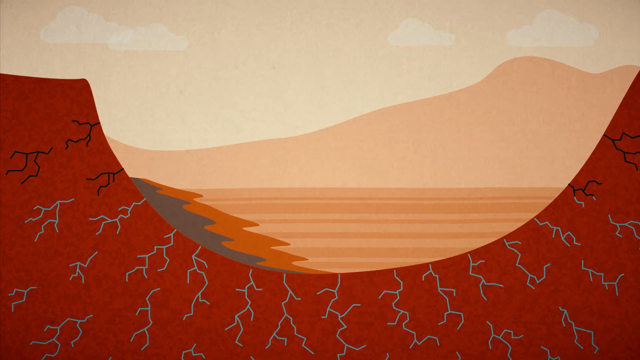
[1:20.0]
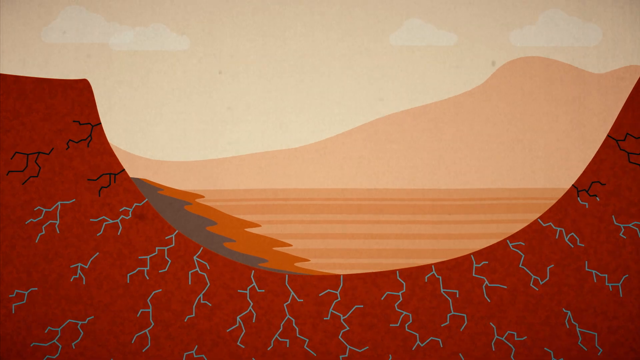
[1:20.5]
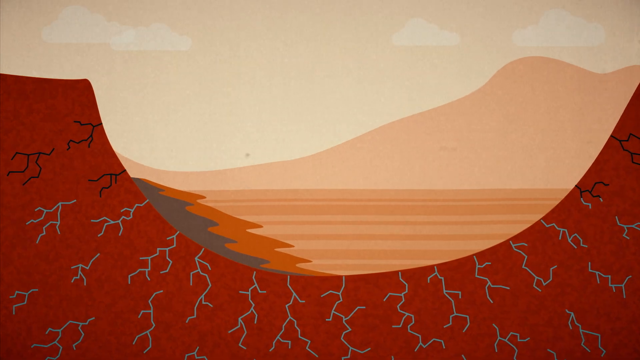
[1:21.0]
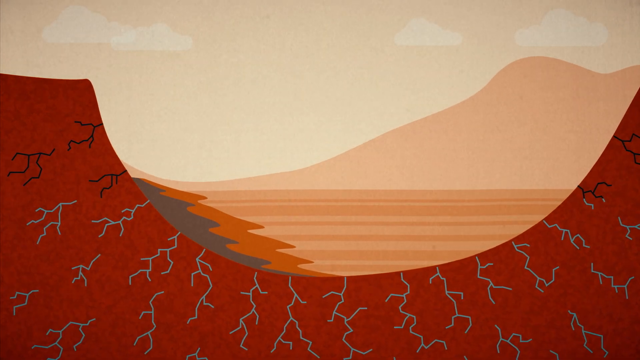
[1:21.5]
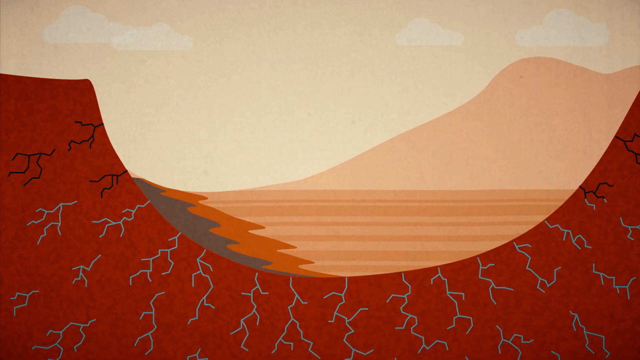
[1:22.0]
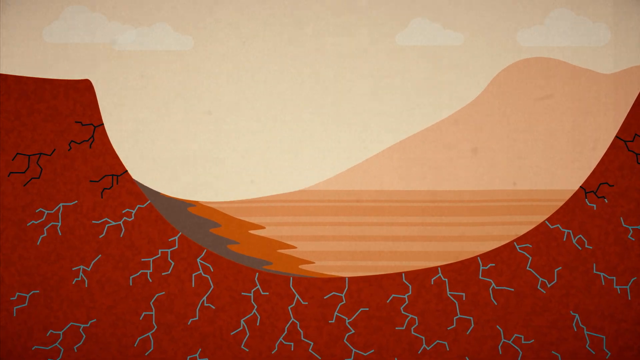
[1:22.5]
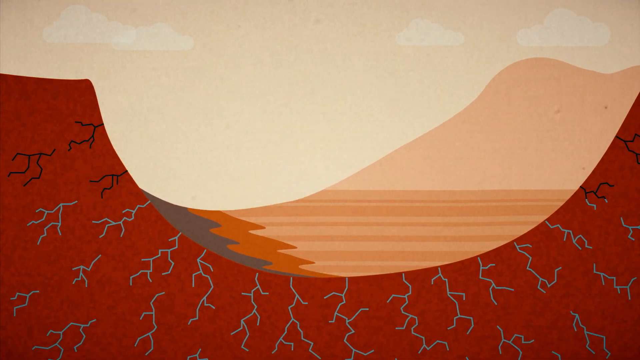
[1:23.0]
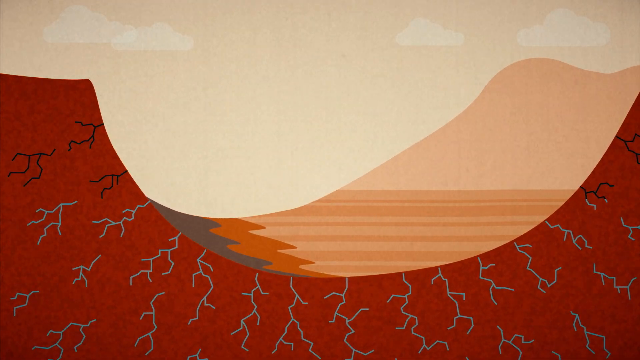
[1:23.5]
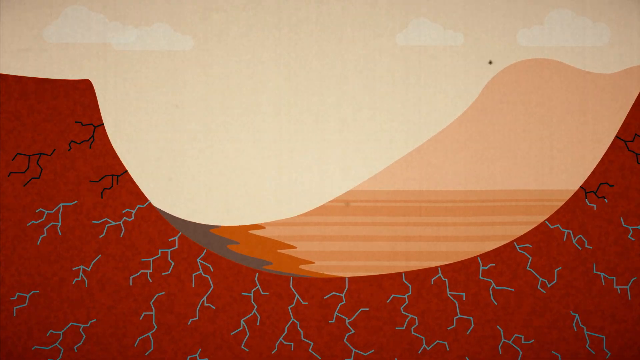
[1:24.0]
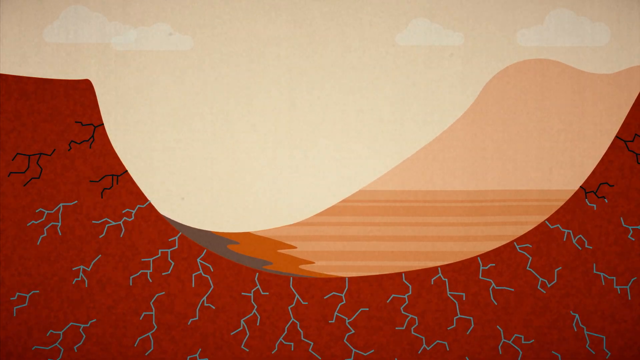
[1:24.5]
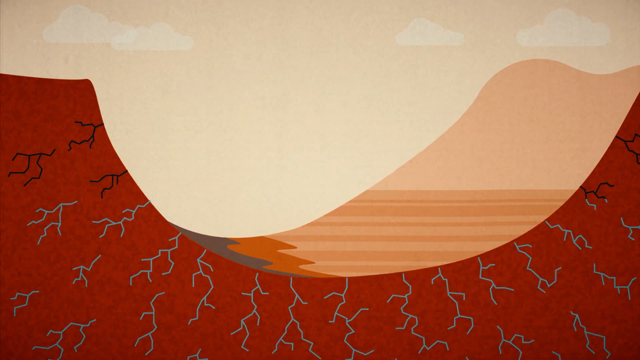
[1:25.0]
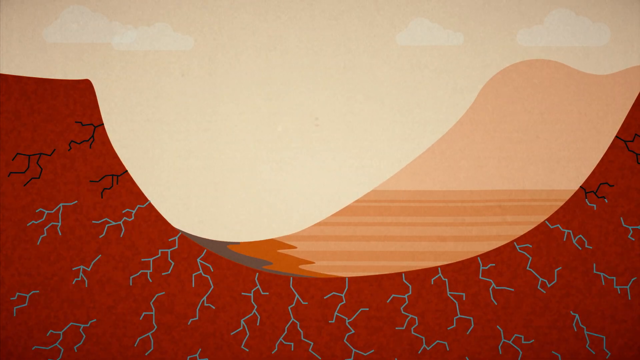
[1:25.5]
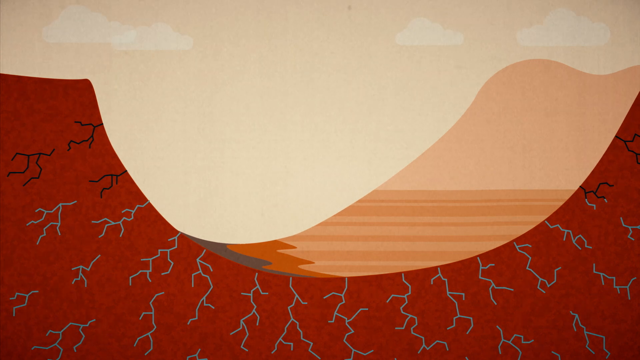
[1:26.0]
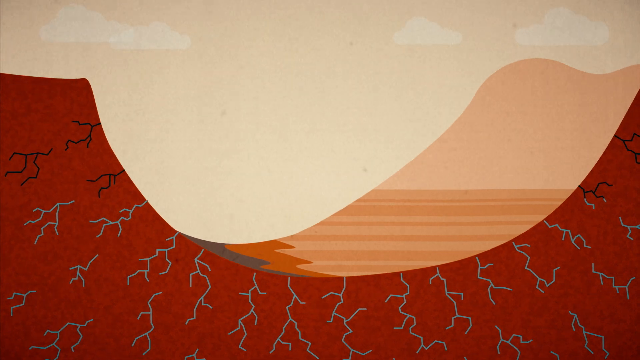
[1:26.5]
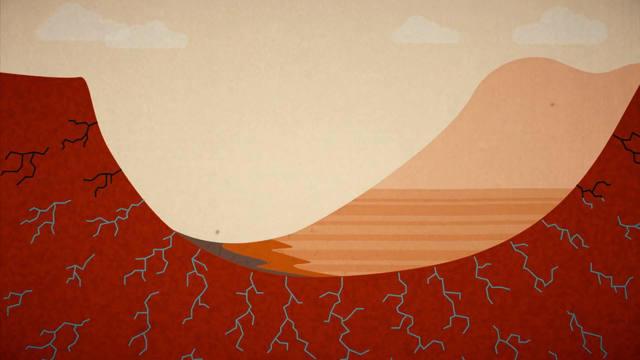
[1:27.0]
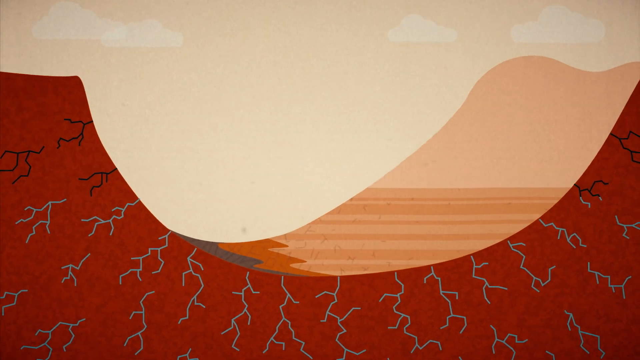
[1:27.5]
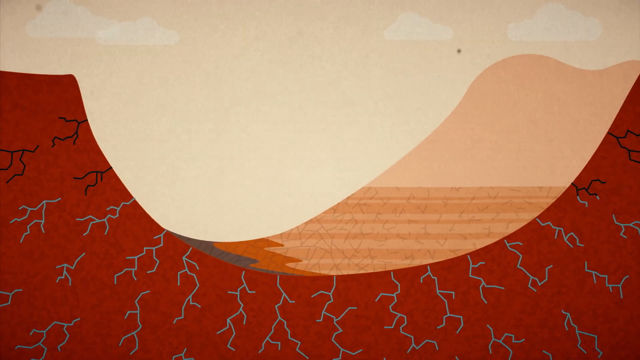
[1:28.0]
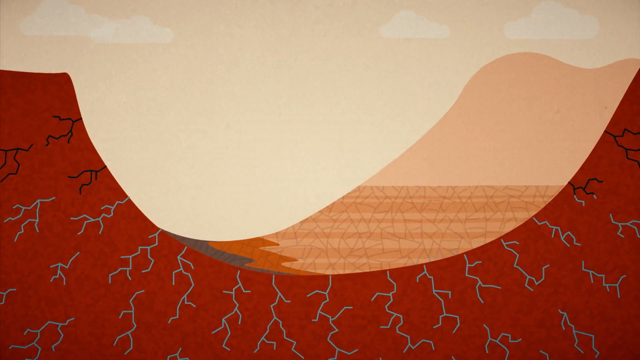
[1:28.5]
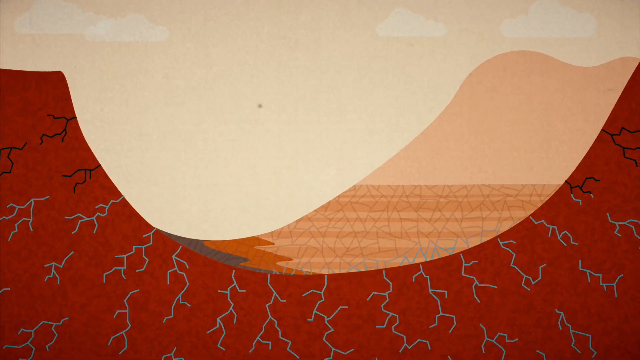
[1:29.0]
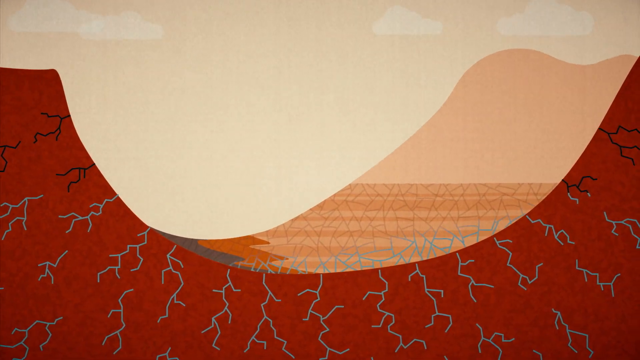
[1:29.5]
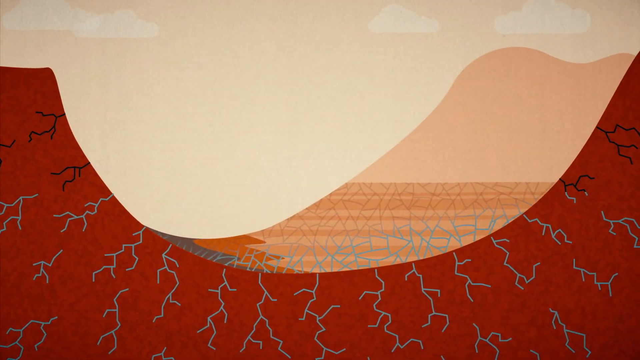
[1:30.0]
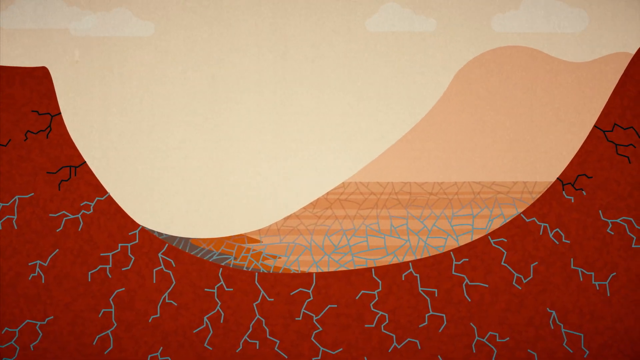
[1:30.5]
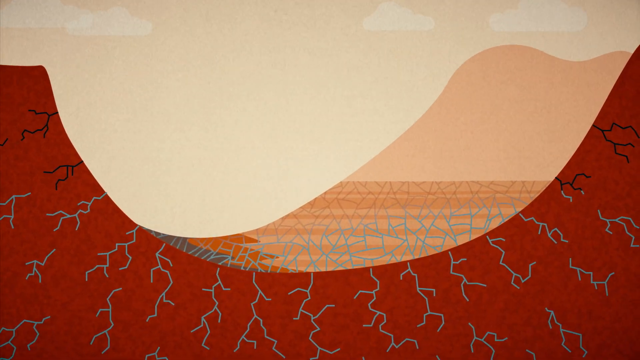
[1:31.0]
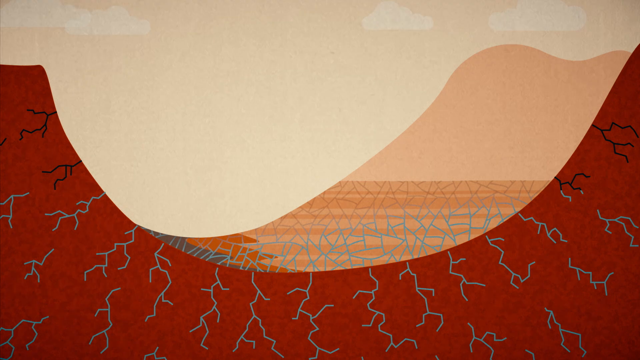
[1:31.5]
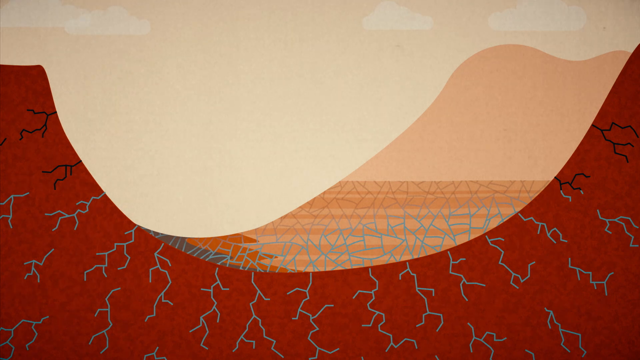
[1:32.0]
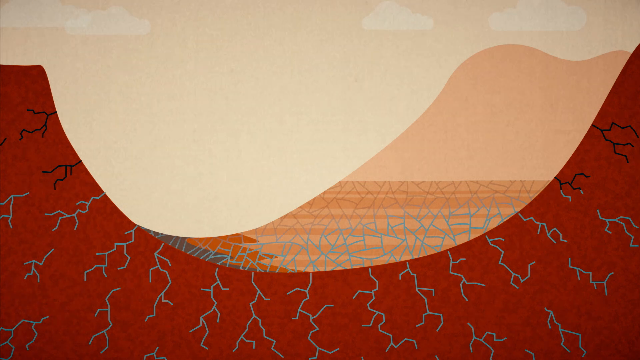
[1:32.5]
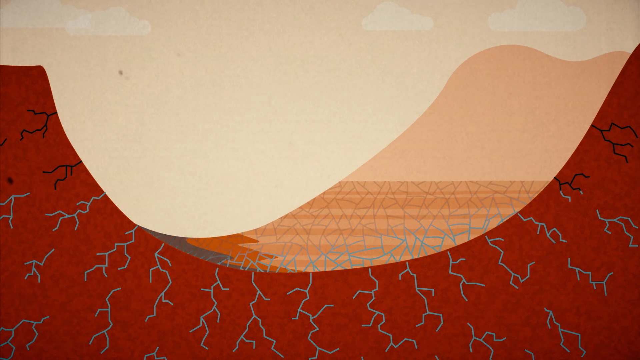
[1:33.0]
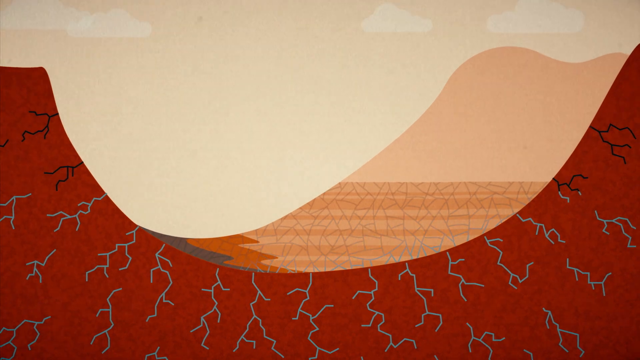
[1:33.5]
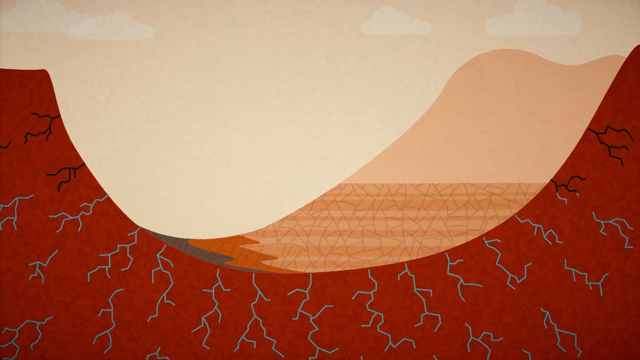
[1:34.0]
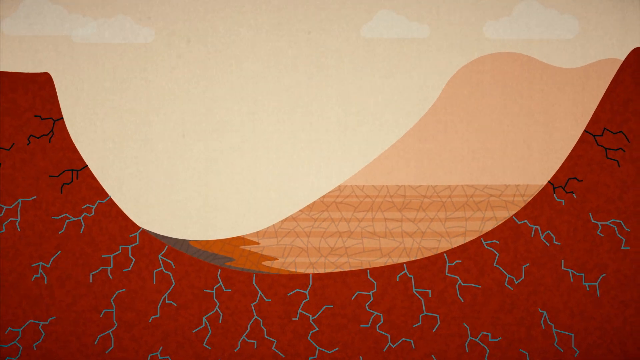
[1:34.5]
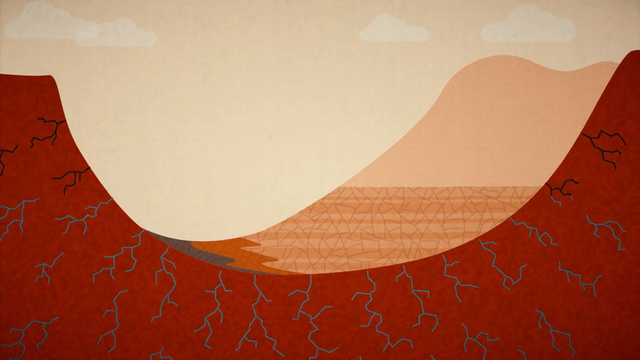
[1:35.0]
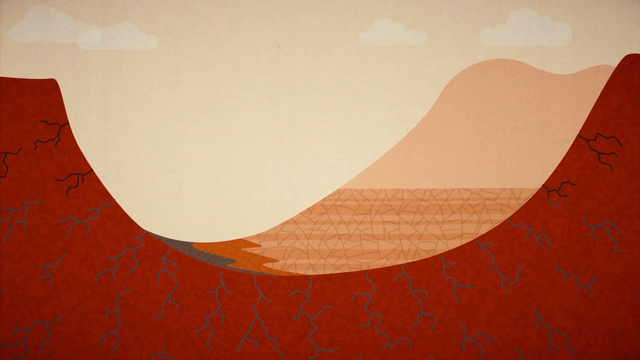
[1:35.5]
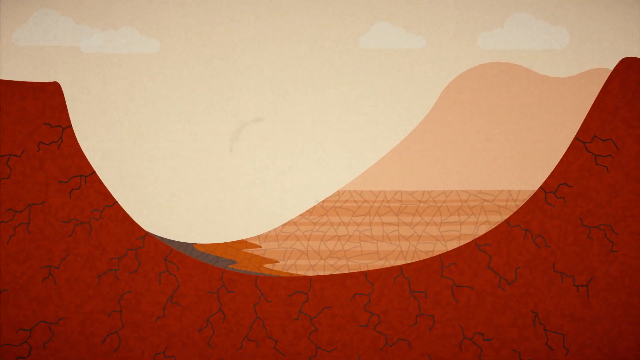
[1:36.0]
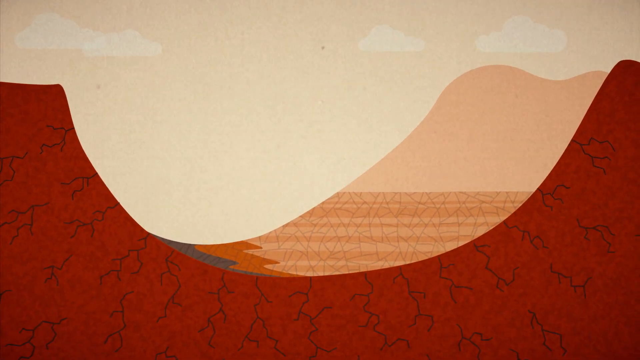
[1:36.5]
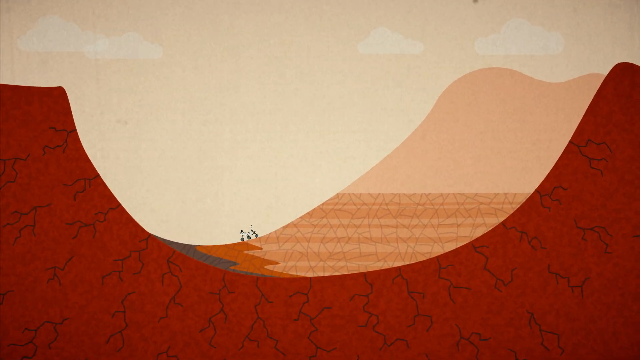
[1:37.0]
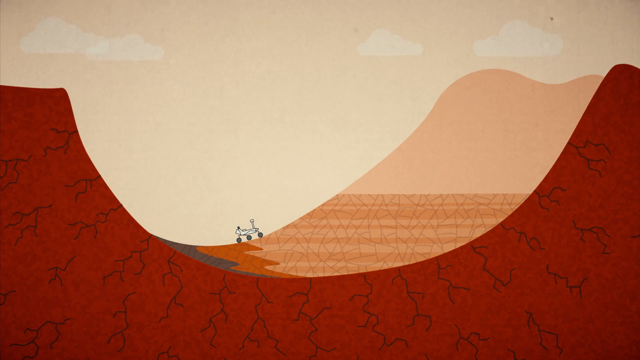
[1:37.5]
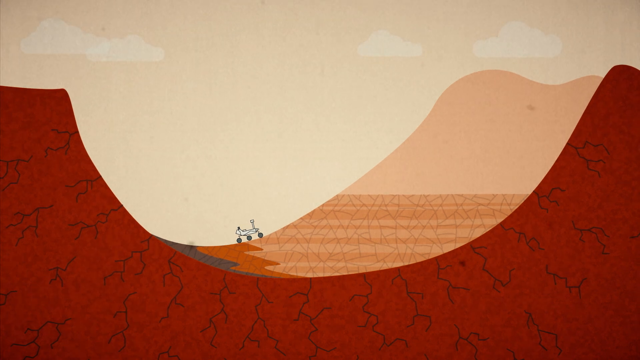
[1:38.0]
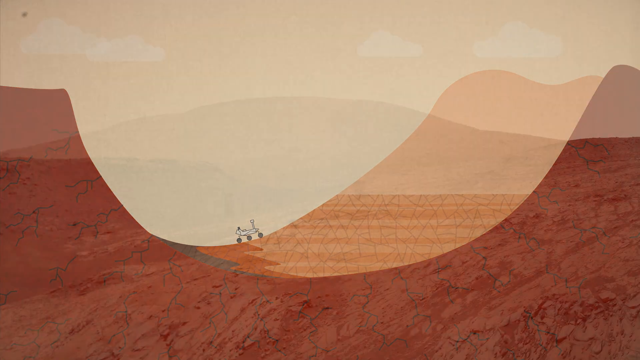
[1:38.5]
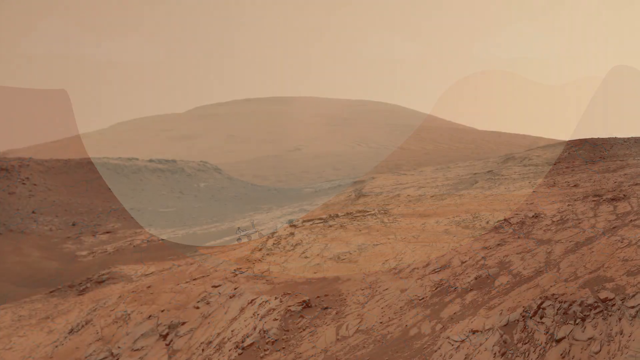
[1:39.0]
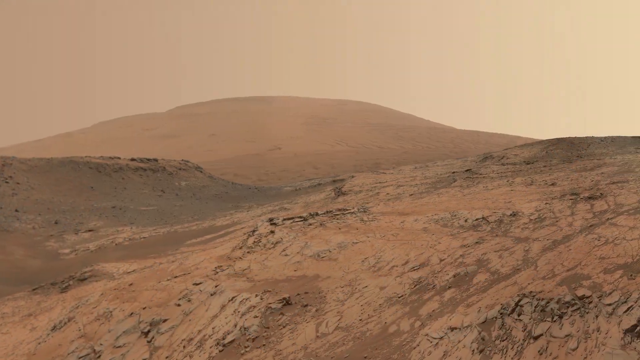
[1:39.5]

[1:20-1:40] The formation of the crater continues. On the left side of the crater, nearly everything is collapsing and kind of drooping in. Much of the gray and rust-brown sediment is kind of disappearing as the sand dune or mountain collapses. When it is done, it sort of appears to maybe solidify. Many light gray cracks form at the base of the terrain, perhaps showing the sand dune turning to rock, and these cracks become darker gray, probably illustrating a hardening of the terrain. The formation is sloping, with a large depression on the left side of the screen, almost in the center, while the right side is more raised and curving. A small illustration of the little rover appears to traverse the curve of the crater and then exits the view. A 3D view of the planet's surface and the crater follows, brown and gray in coloration.